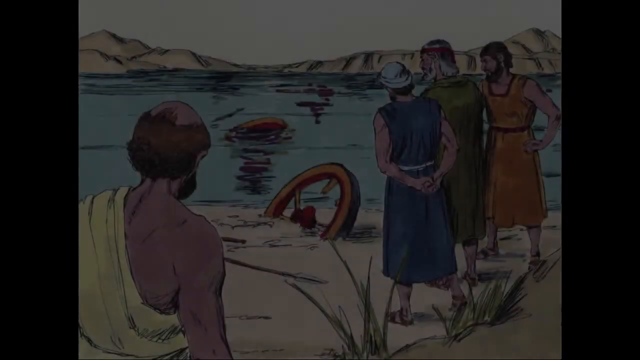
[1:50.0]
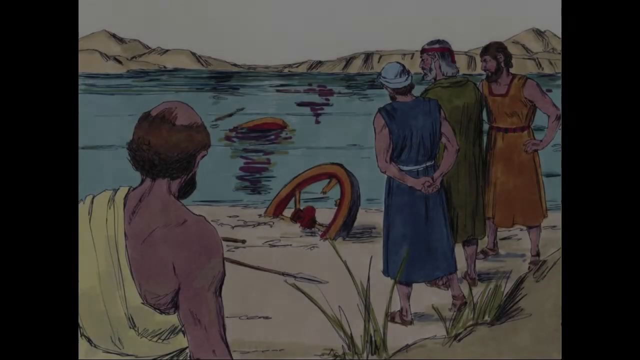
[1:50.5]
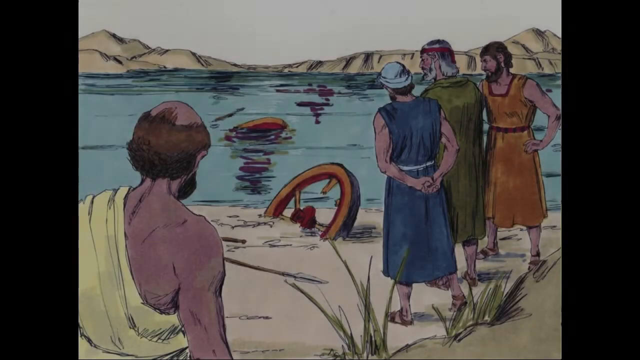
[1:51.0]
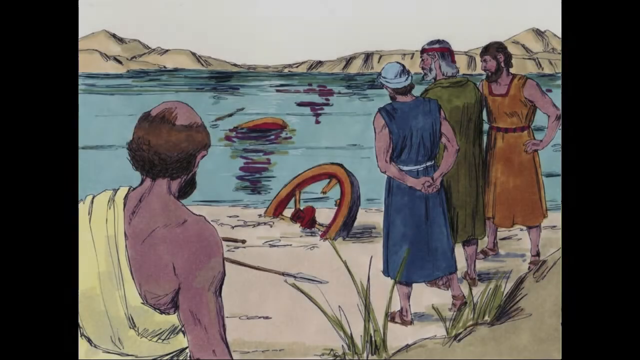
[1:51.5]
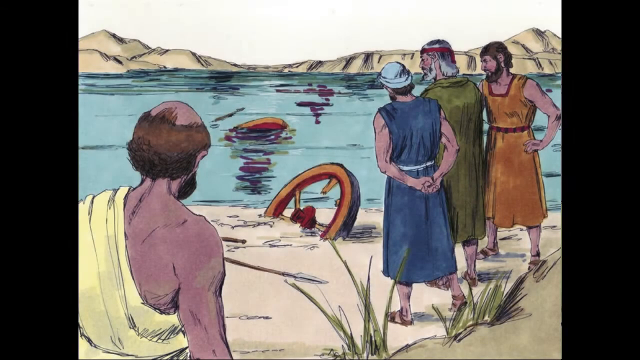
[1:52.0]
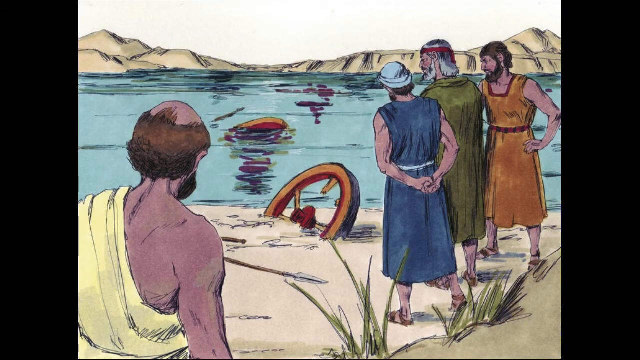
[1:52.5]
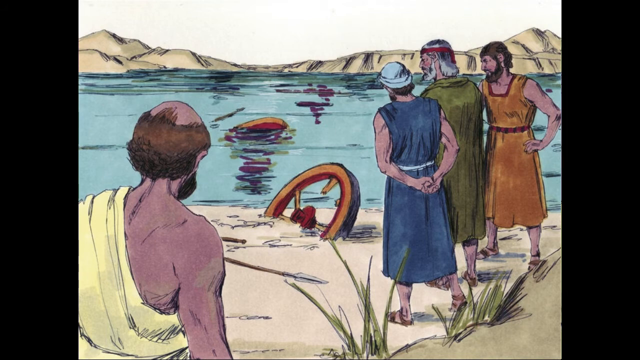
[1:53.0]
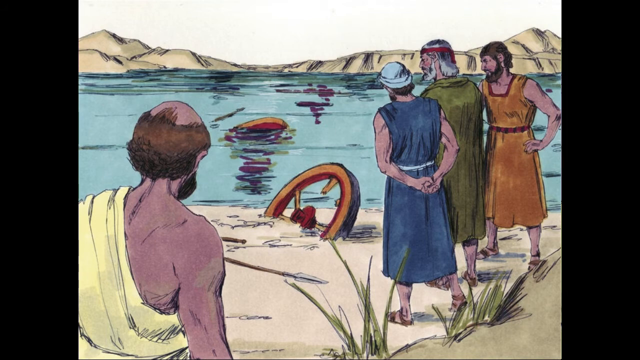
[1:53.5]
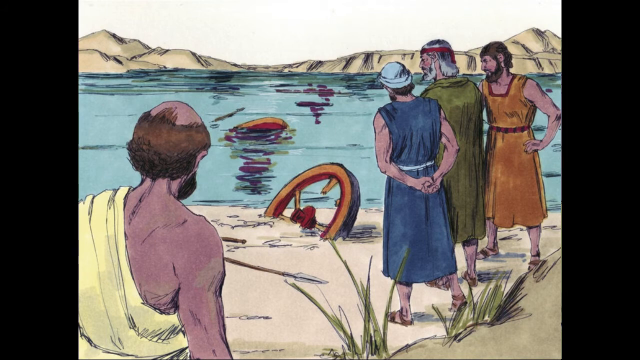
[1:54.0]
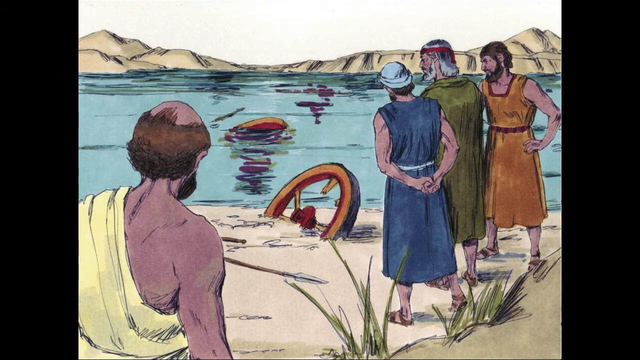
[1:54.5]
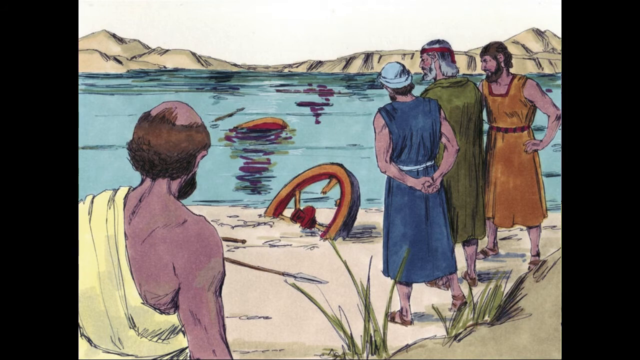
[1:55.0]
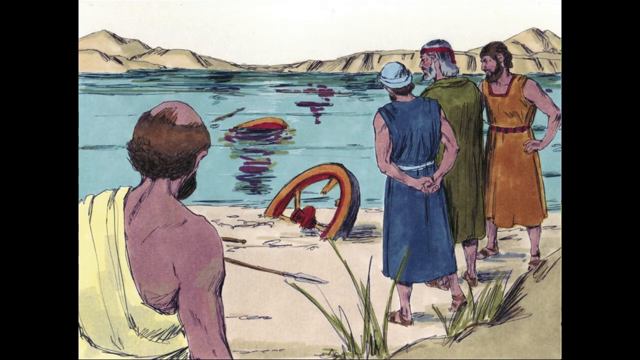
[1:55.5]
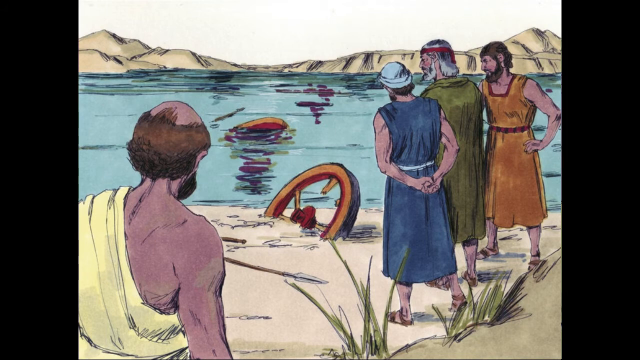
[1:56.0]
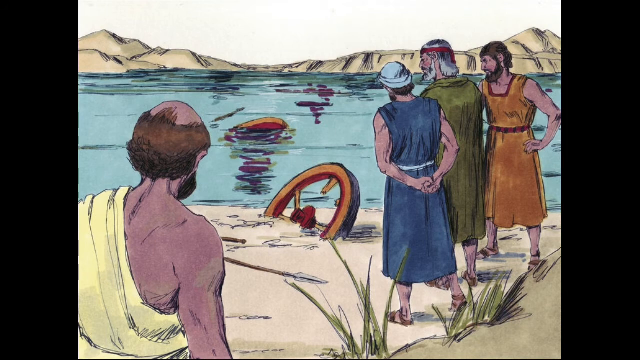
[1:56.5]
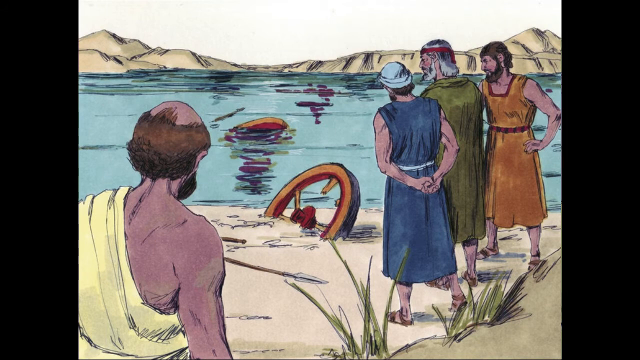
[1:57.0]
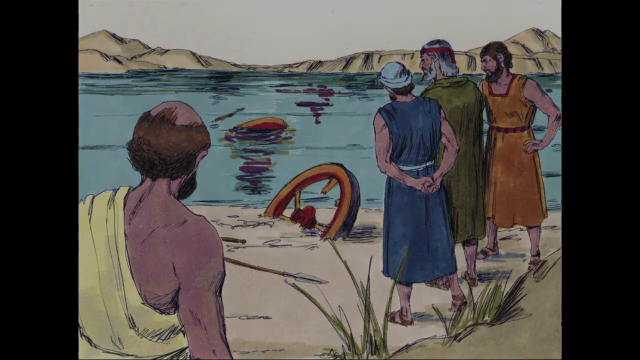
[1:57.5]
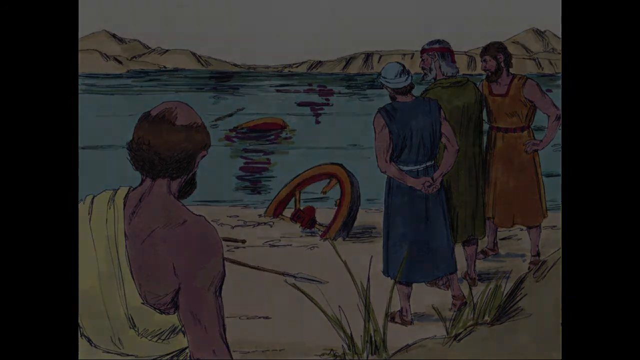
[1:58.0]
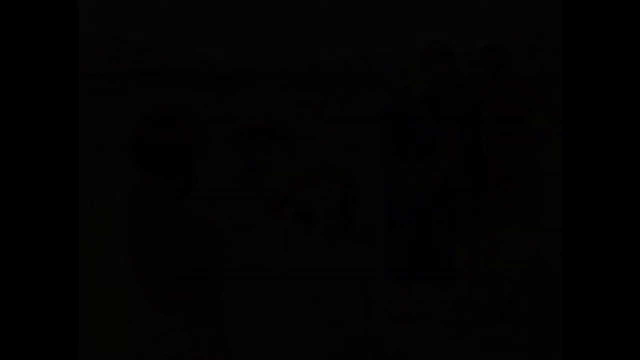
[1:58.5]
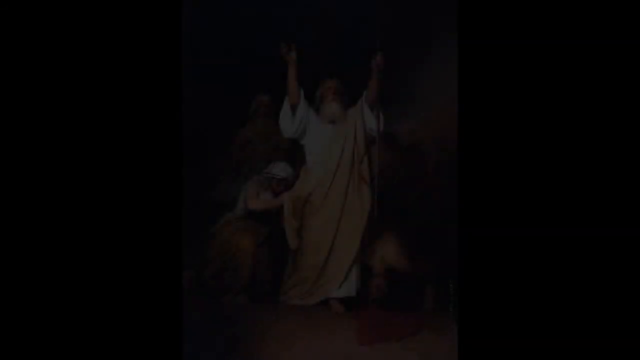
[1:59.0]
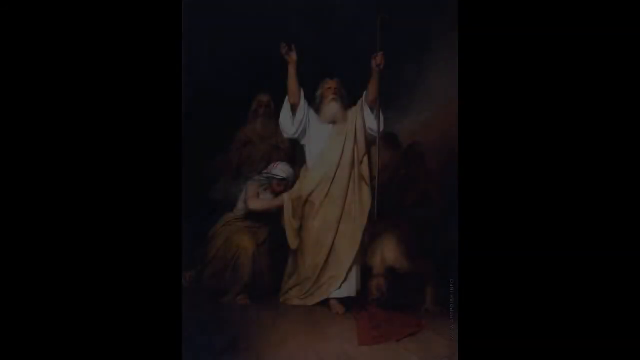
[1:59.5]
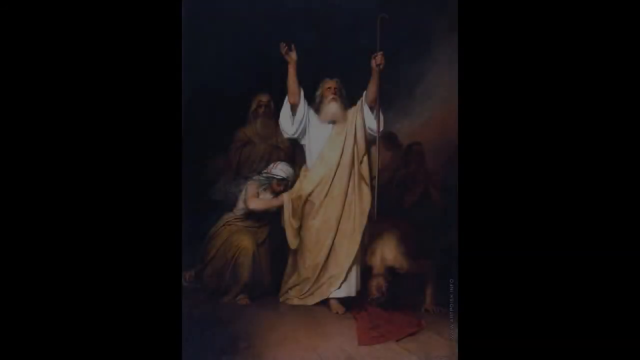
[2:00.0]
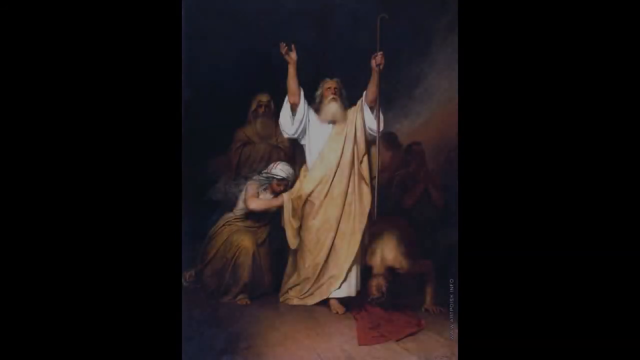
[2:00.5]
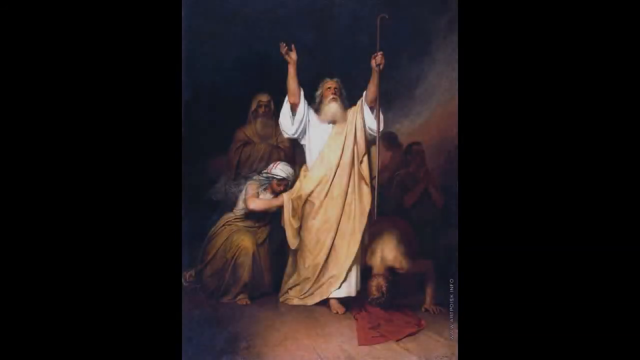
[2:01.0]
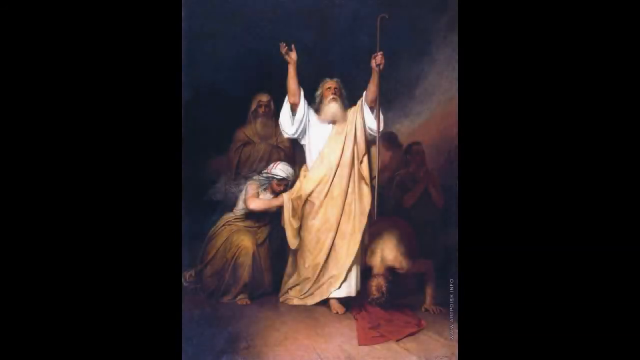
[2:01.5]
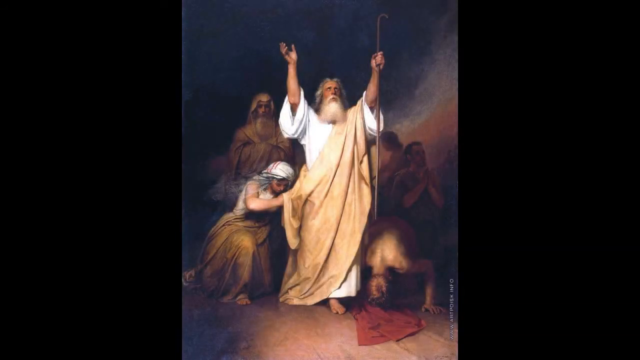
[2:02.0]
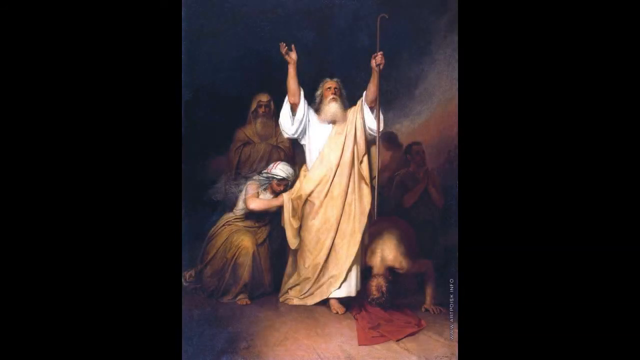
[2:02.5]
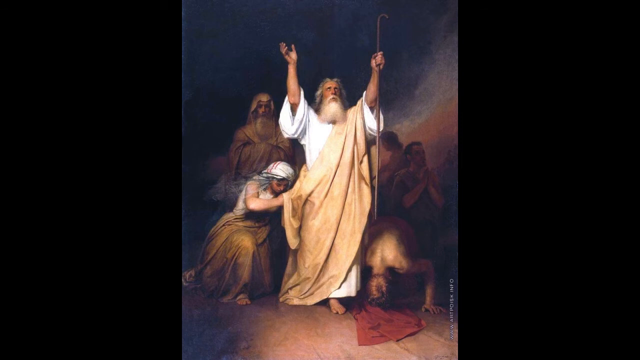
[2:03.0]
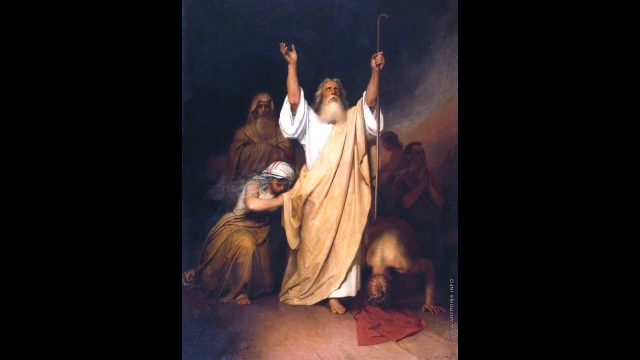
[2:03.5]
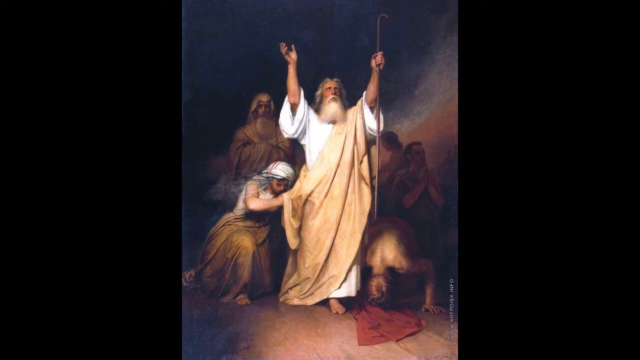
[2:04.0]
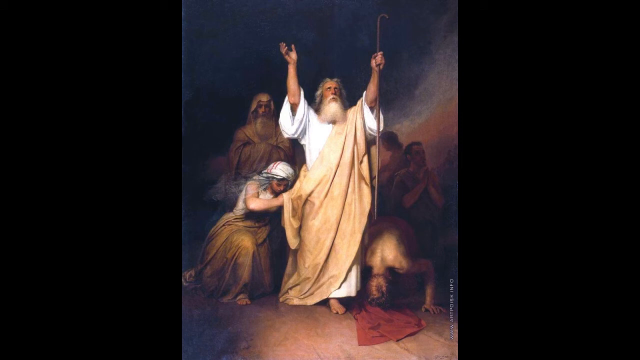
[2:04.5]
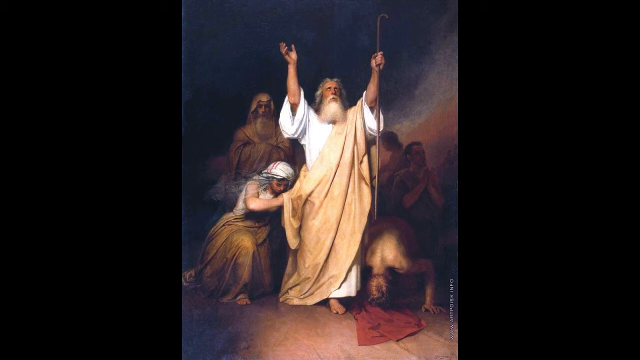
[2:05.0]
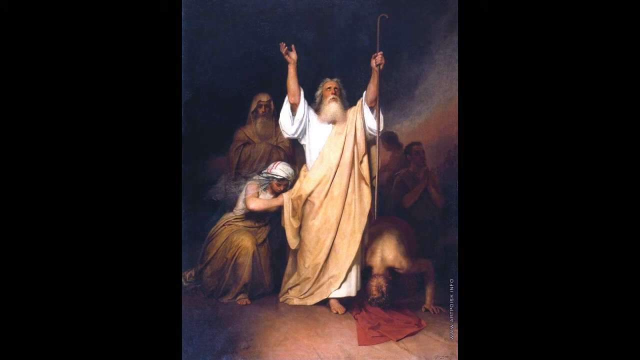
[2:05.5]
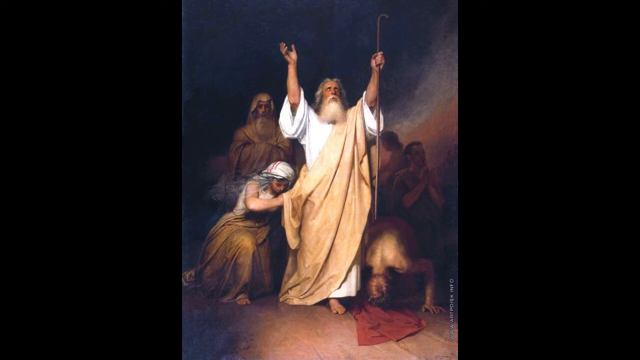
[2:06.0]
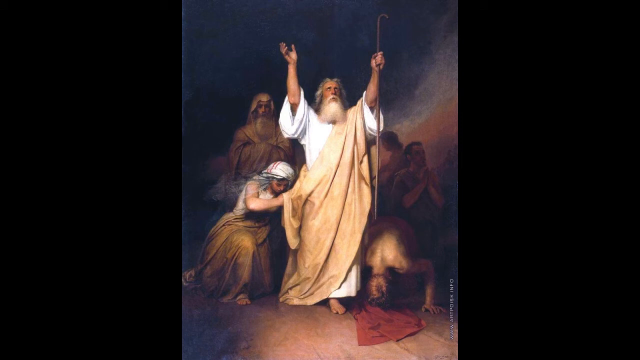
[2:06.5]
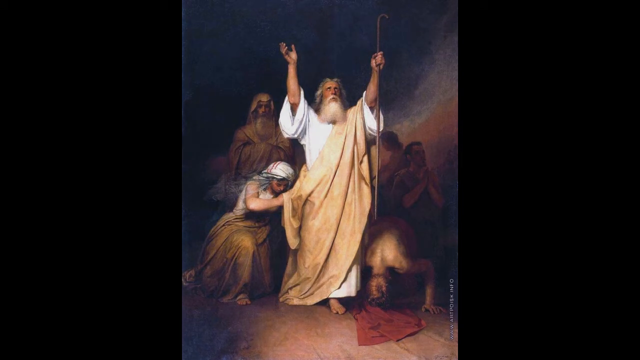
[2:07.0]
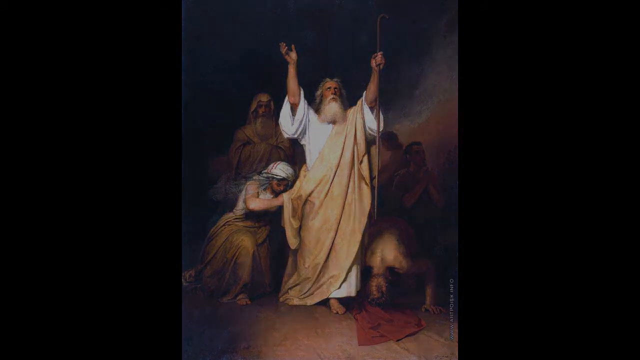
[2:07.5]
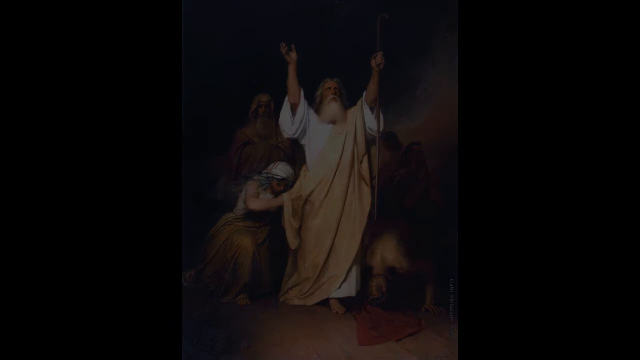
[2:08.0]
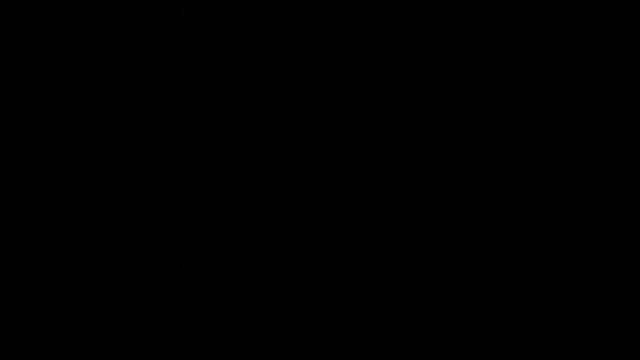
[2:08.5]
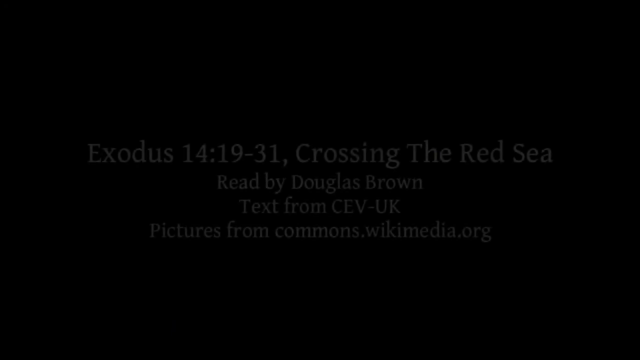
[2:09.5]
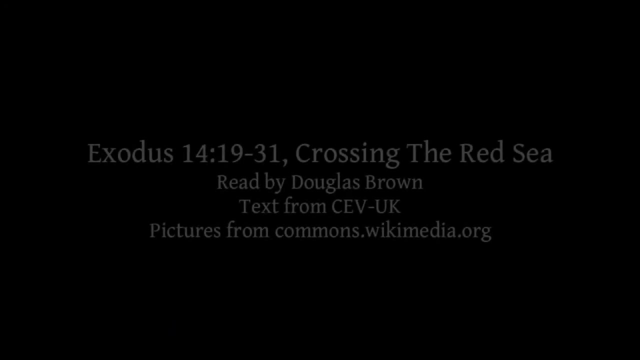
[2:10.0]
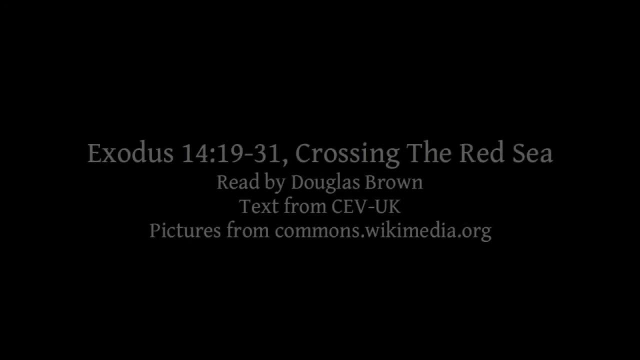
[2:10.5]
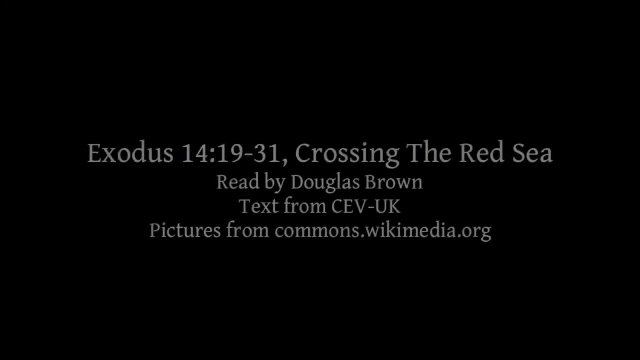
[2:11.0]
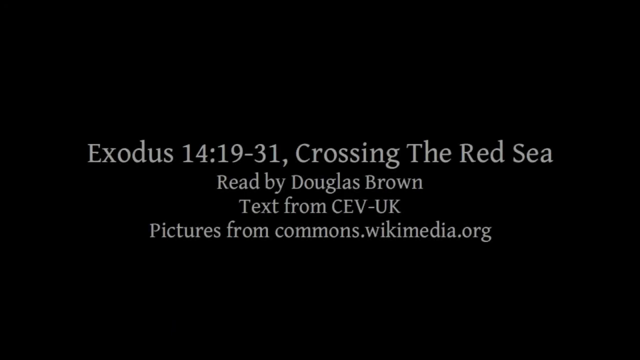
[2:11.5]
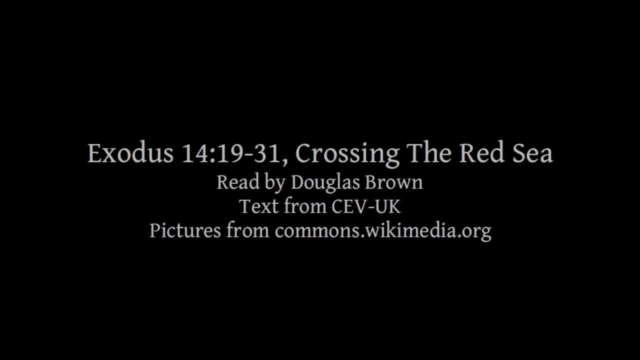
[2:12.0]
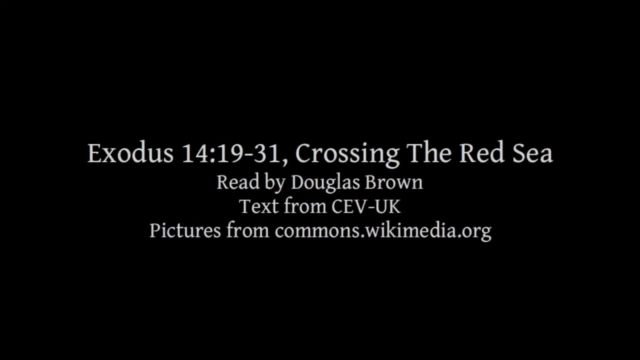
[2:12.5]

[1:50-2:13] Everyone seems to be sinking in the water. Many people, animals and vehicles are in the water, and broken things are visible on the surface. In the last part, a person raises his two hands to the sky, possibly praying or asking for mercy, and many people are with him.